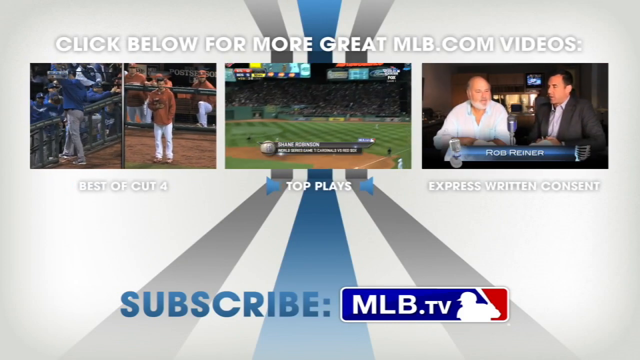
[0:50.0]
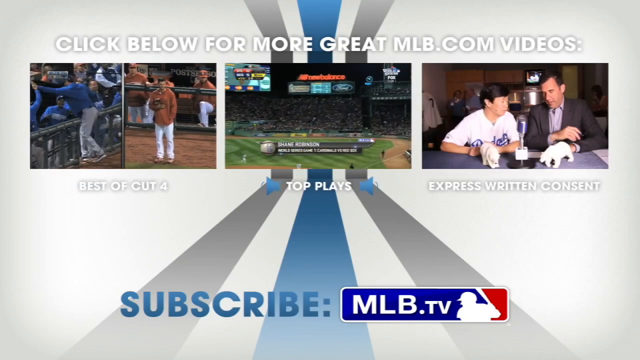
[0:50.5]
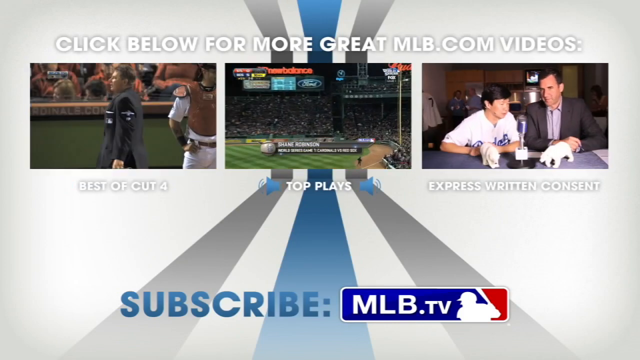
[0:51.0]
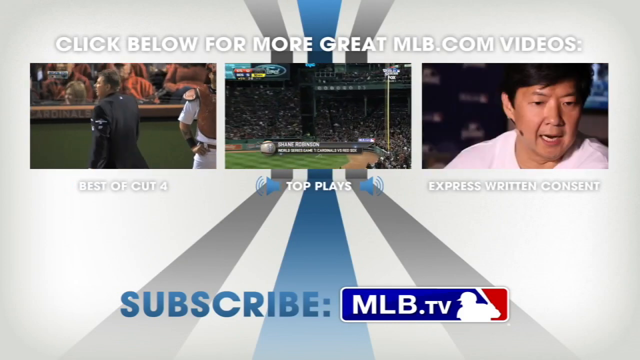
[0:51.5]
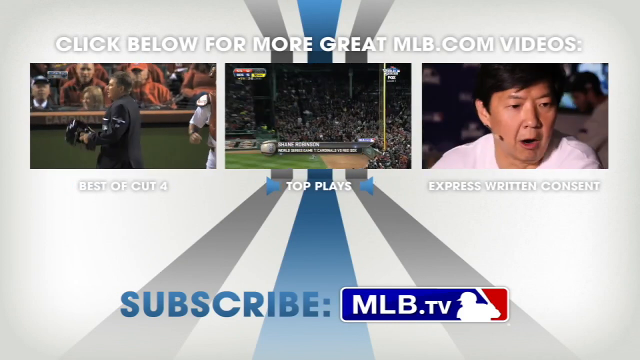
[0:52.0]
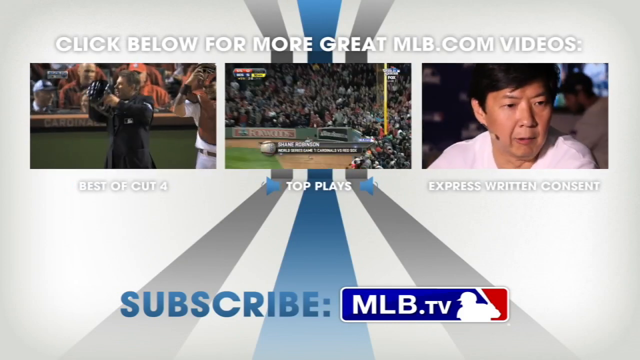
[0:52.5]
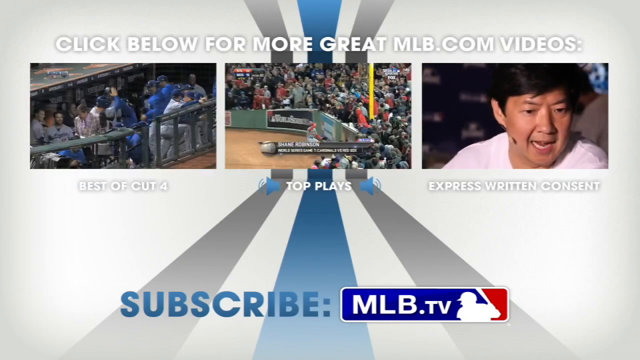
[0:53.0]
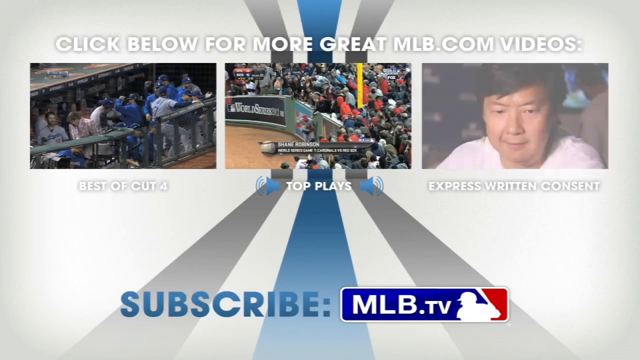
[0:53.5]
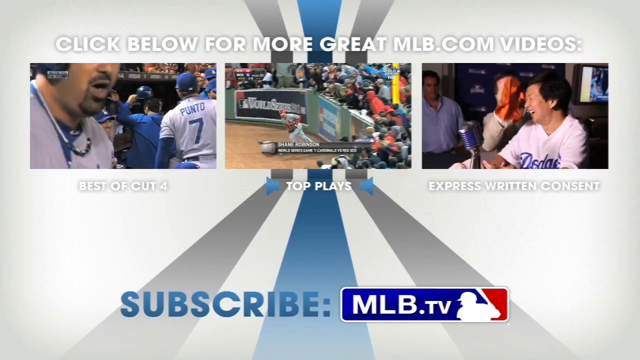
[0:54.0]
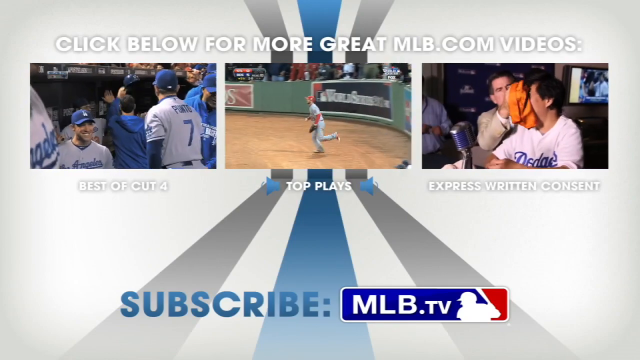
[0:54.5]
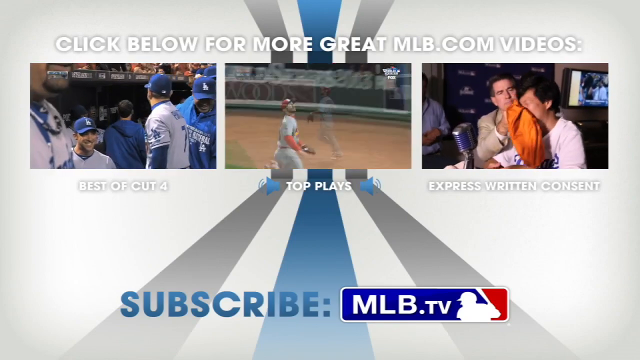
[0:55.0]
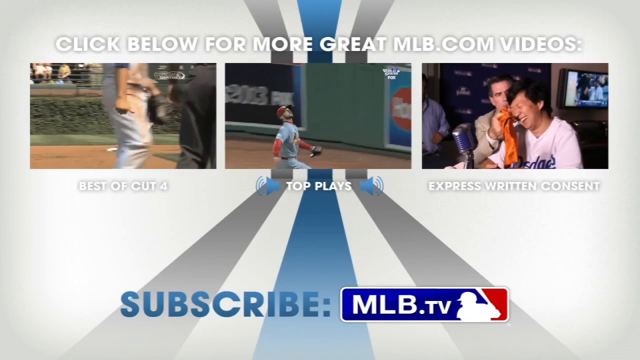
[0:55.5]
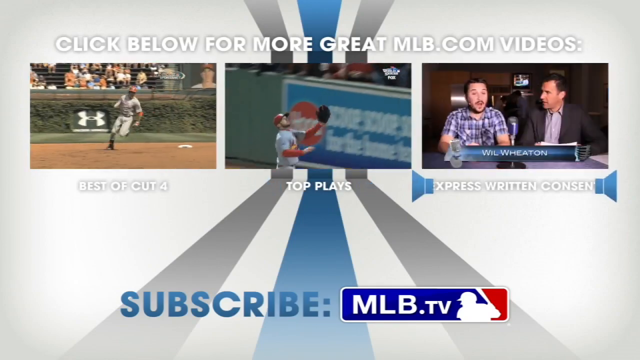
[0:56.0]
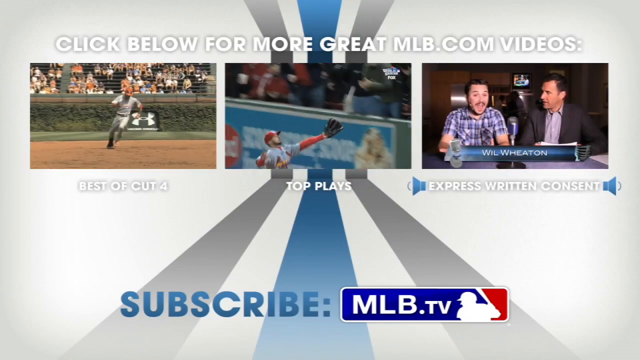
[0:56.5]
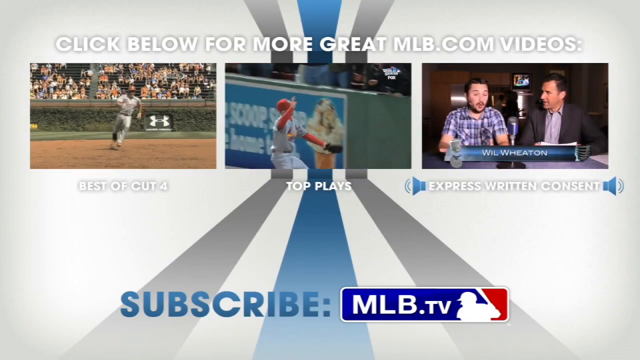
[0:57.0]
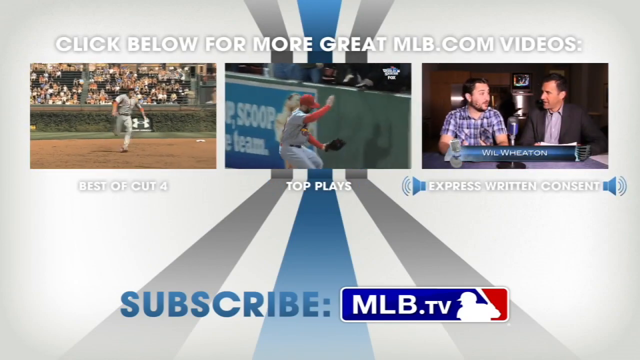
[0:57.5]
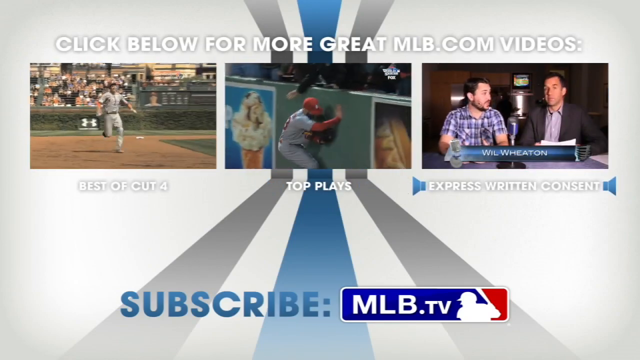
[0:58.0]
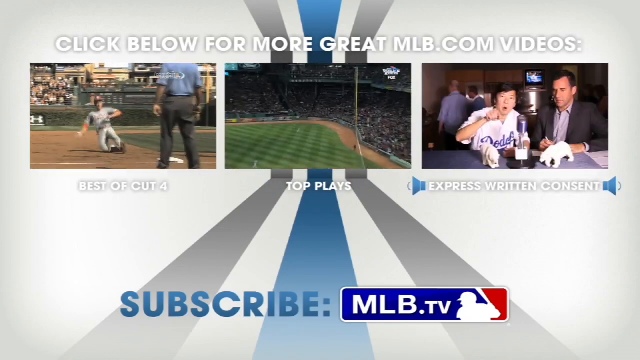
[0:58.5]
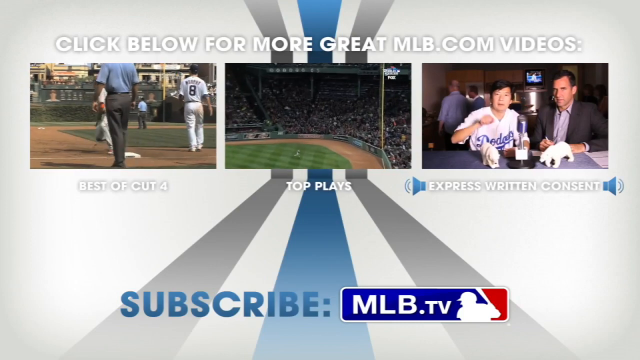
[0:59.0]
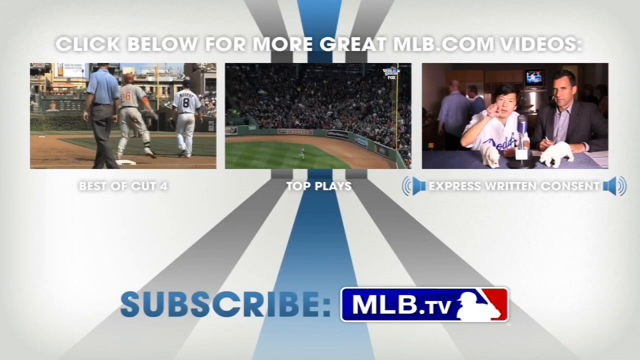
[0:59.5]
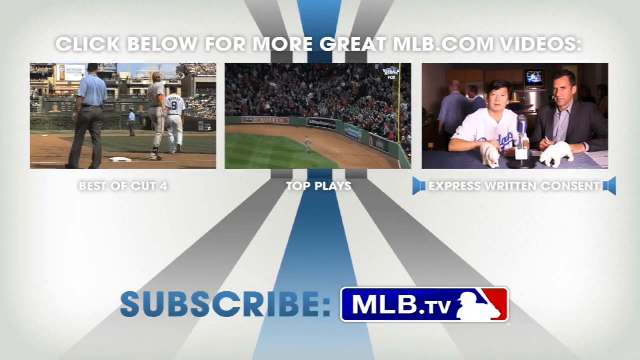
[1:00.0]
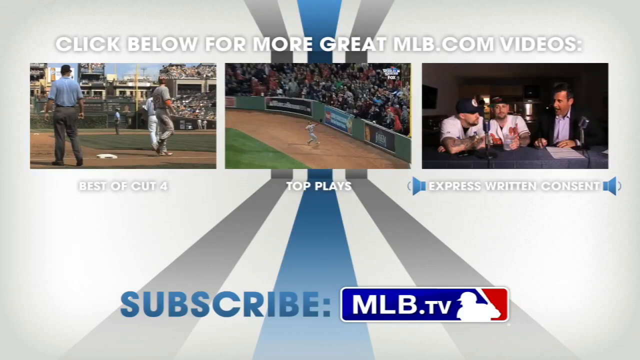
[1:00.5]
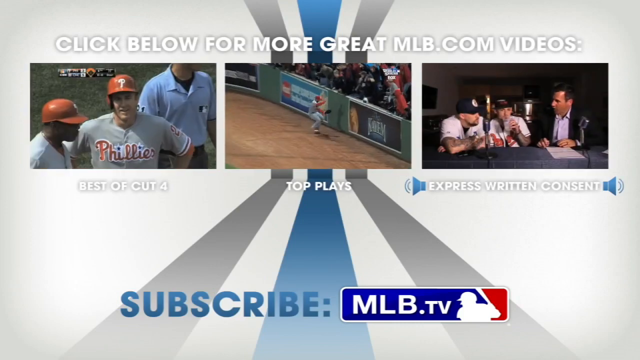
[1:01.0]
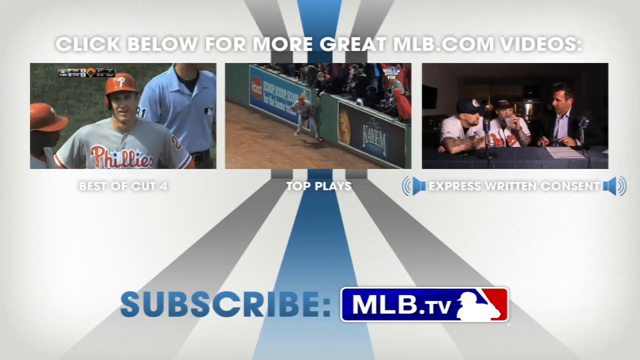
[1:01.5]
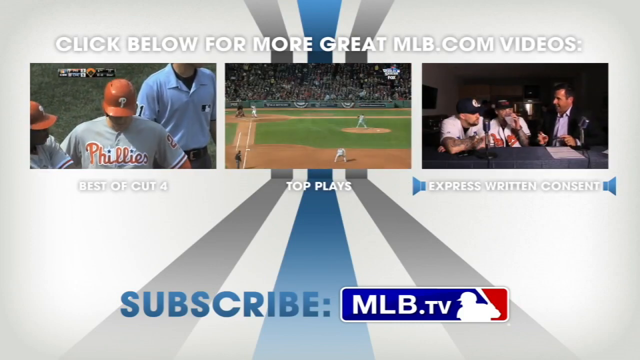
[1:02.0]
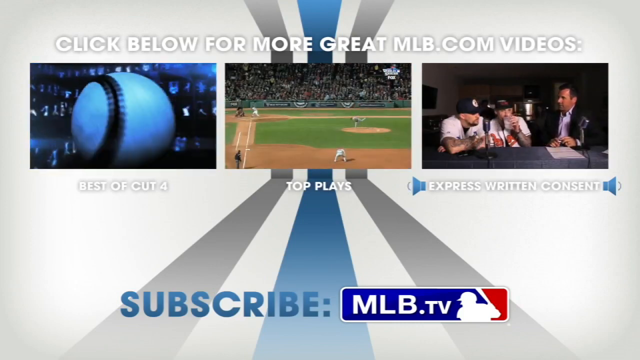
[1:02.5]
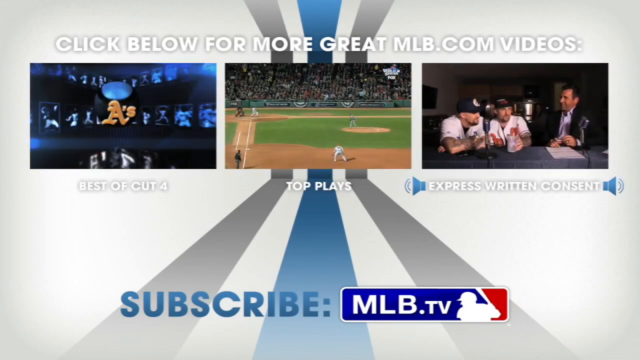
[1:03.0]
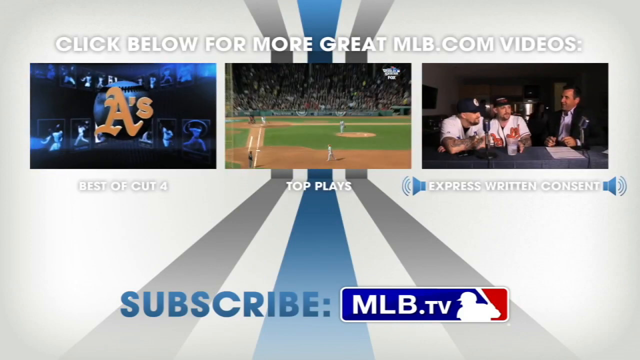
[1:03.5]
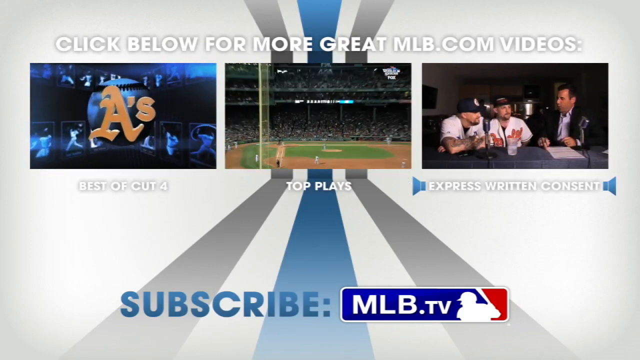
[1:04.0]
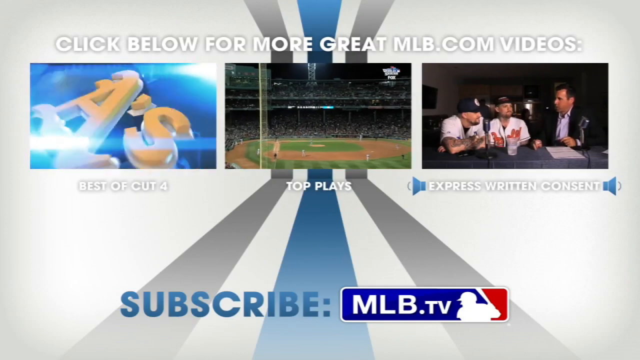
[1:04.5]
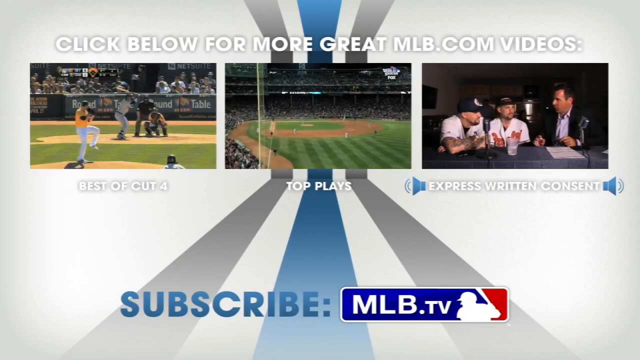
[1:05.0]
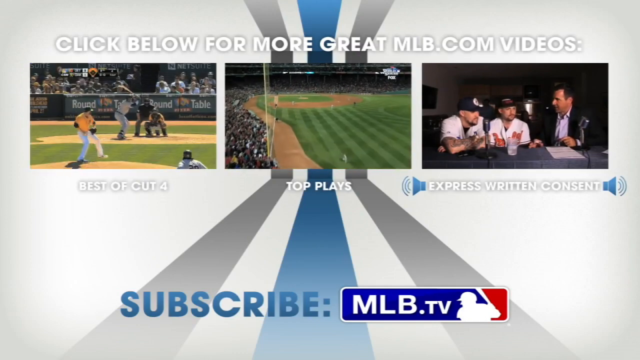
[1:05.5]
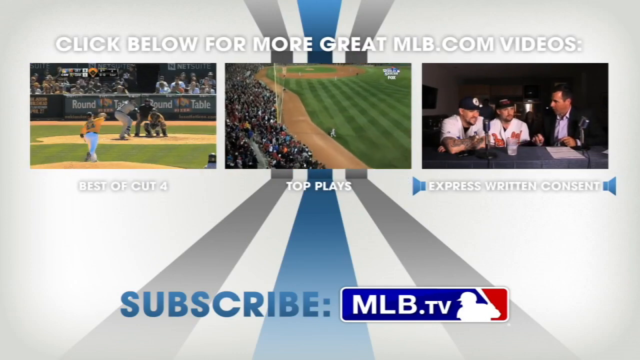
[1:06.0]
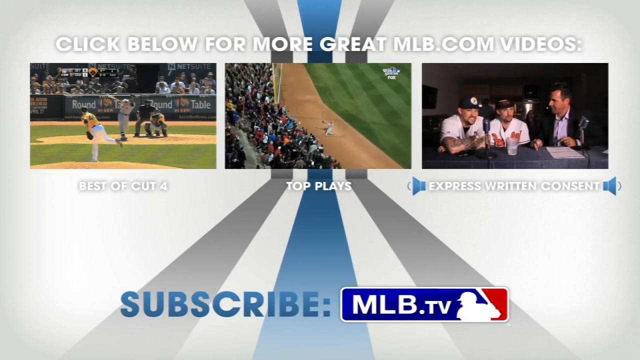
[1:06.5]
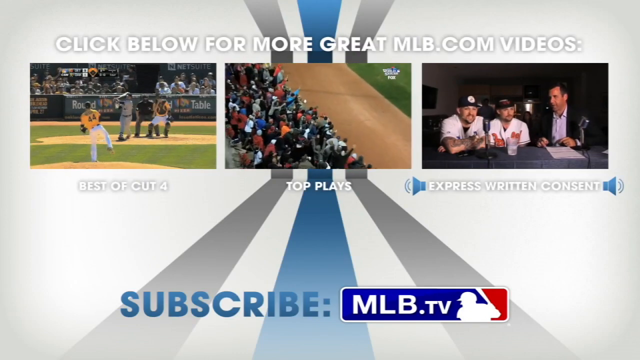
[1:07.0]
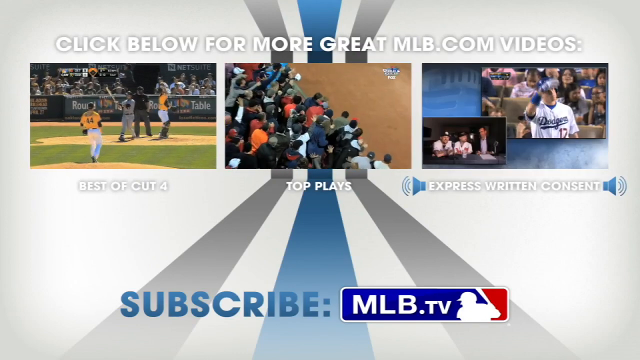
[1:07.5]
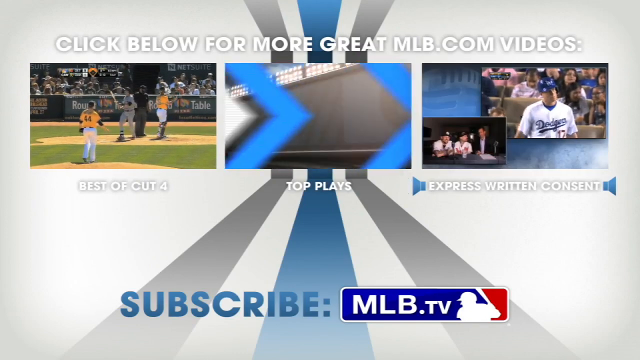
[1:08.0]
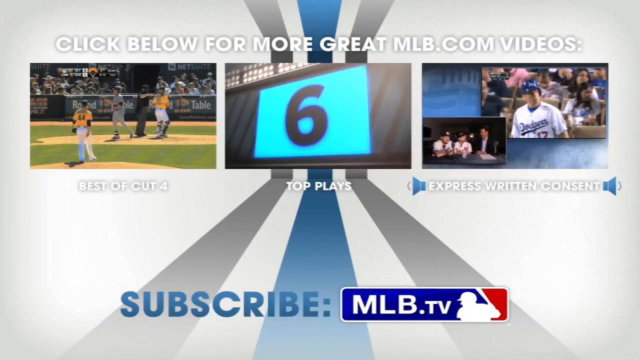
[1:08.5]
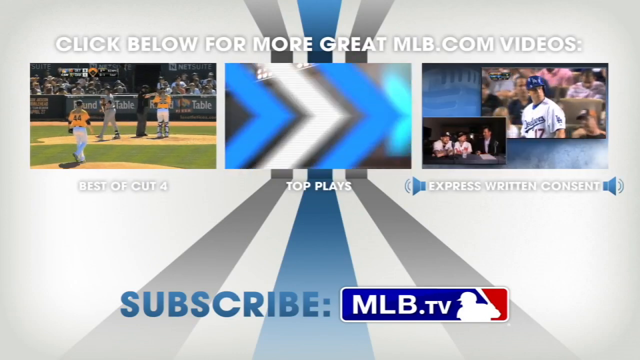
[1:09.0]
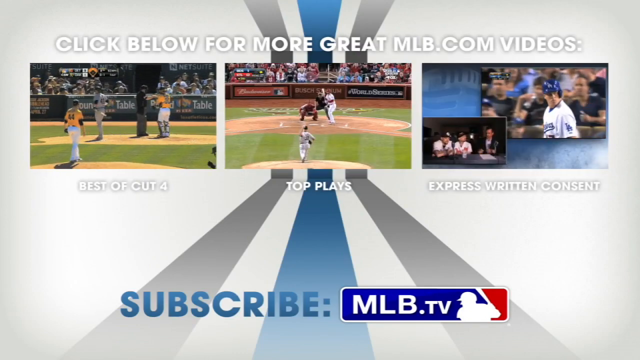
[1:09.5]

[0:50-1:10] A commercial for MLB TV says "subscribe MLB.TV" above three videos. The video on the left is "the best of cut four" and appears to be about the Oakland A's, since the A's logo is visible. The middle video says "Top Plays" and appears to show someone hitting a ball to the outfield and a baseball player catching the ball and hitting the wall afterwards. The video on the right says "Express Written Consent" and shows what looks like several celebrities sitting around talking about the Dodgers; one of them looks like Ken Jeong, and text says Will Wheaton is in it.